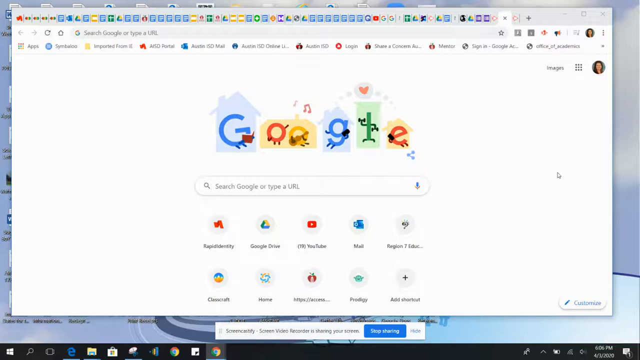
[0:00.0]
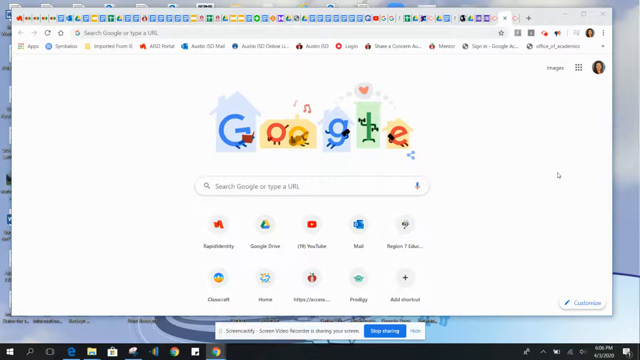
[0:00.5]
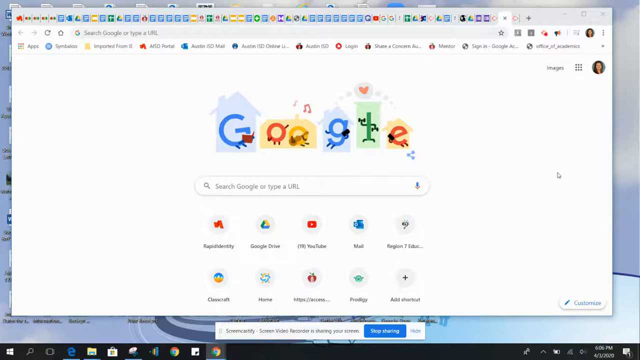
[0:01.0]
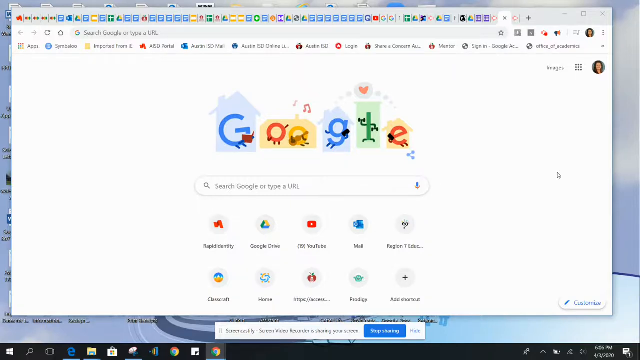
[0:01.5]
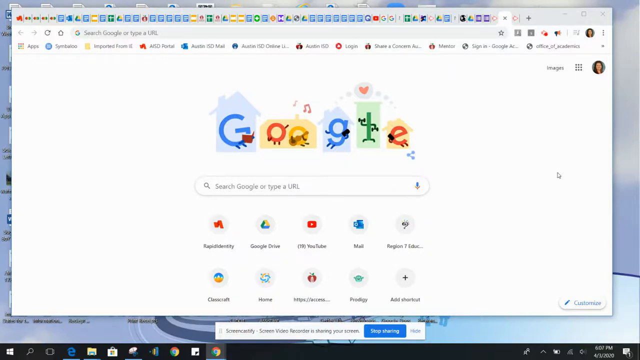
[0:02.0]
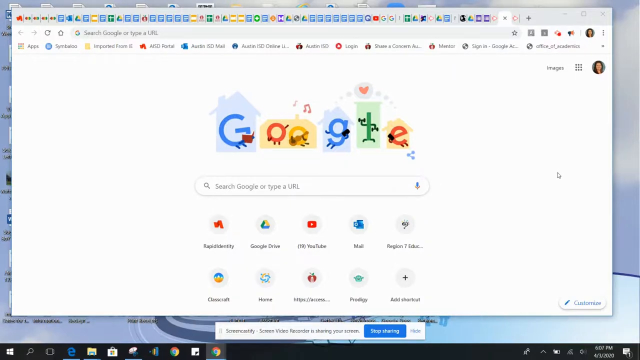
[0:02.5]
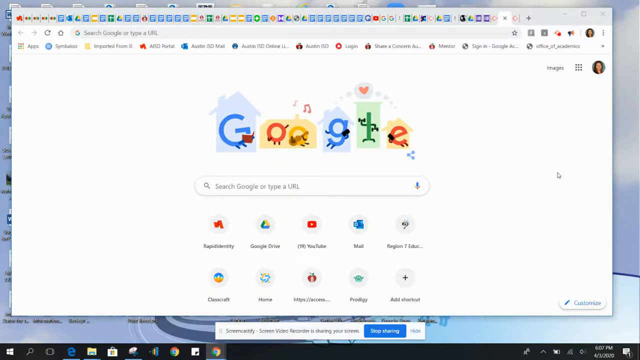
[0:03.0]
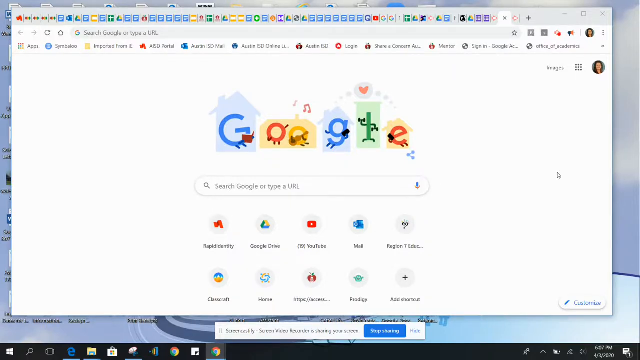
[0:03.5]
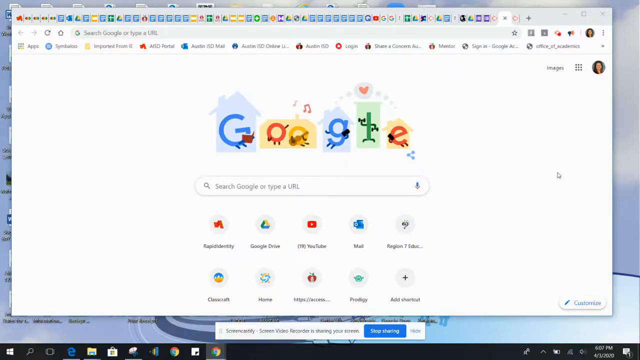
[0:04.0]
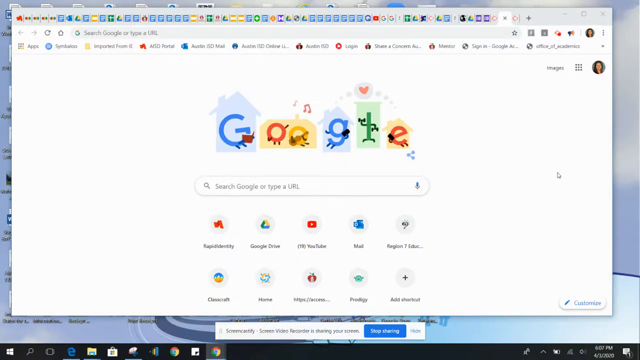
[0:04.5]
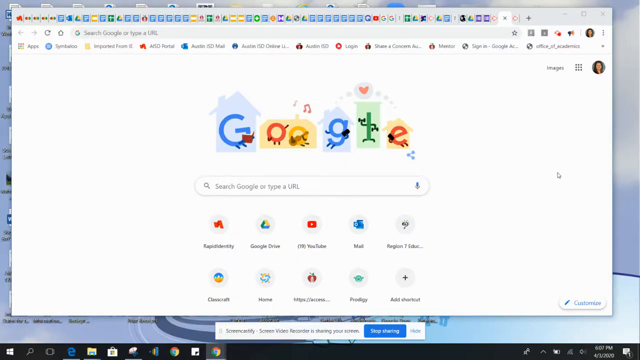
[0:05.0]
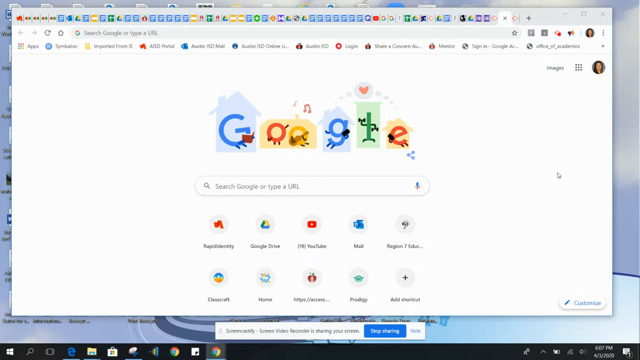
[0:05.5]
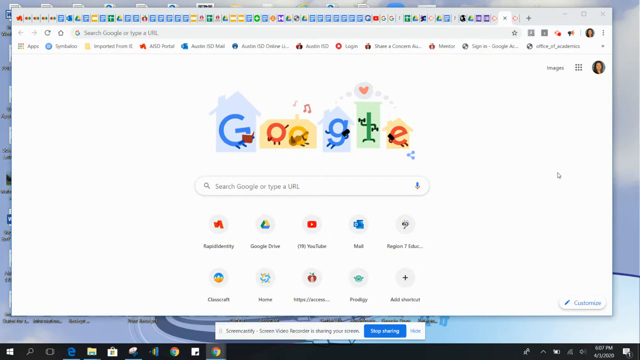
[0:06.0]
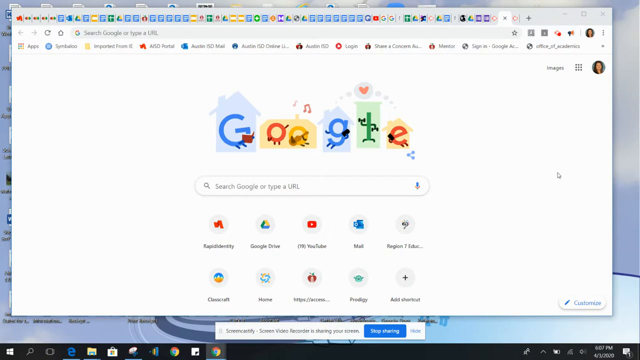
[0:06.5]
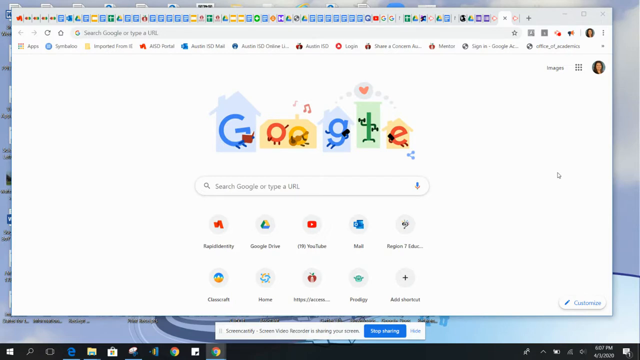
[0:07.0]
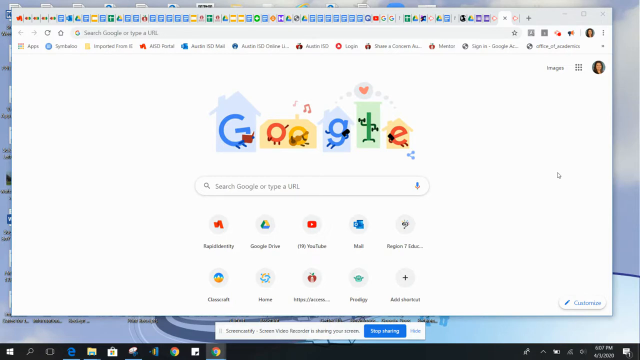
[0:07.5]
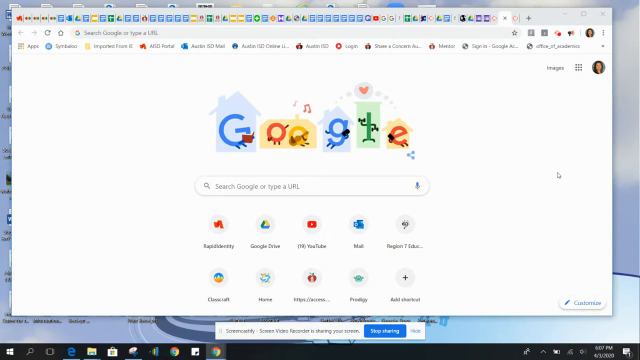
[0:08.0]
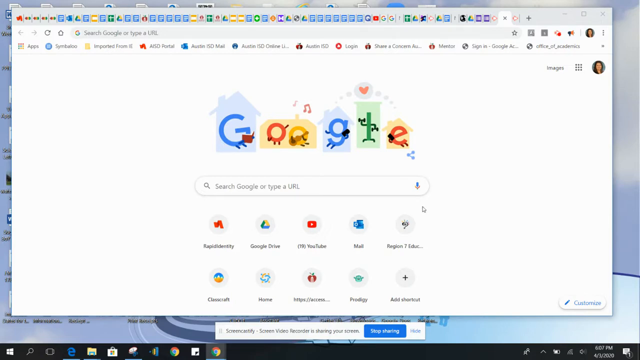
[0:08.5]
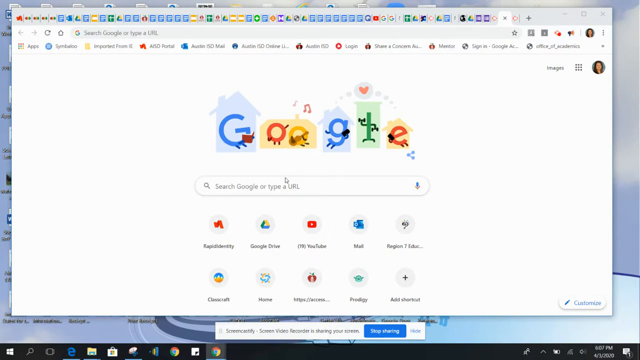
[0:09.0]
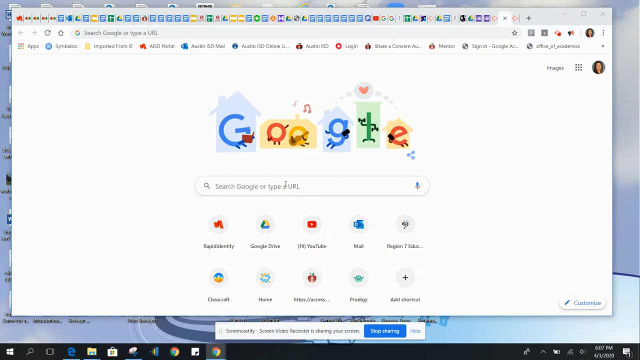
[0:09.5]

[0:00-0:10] A person is screen sharing their desktop, apparently on a single monitor. The desktop background is open, with many icons on its left side, seemingly extending past half the screen. Most of the screen is blocked, so only a couple of pixels of the desktop are visible on each outer edge. A browser that looks like Google Chrome is up, with at least around 30 tabs open; each tab is very small, showing an icon and no text. The current tab is a new tab with Google search, and 10 shortcuts or favorites appear below the Google bar. The mouse moves around as if getting ready to do something.